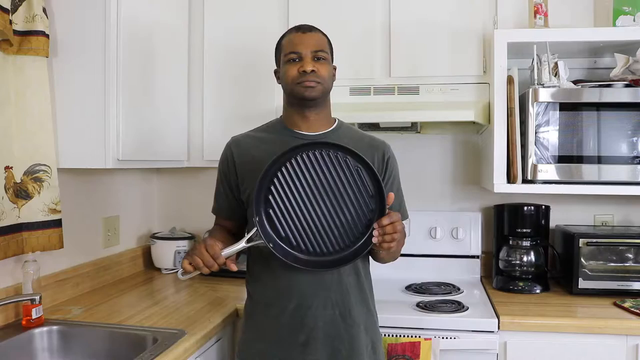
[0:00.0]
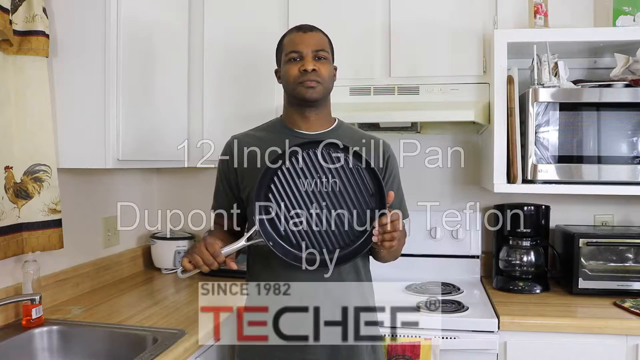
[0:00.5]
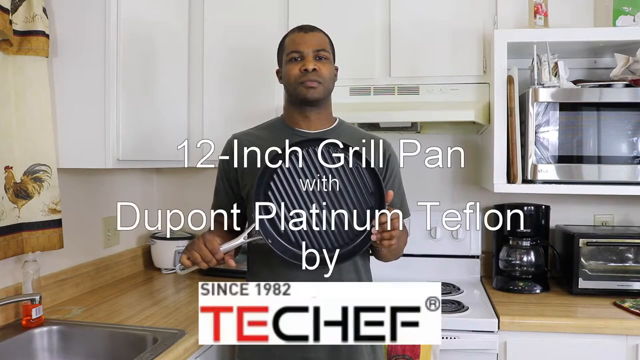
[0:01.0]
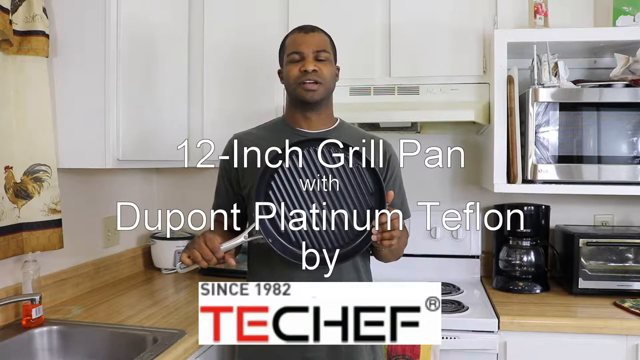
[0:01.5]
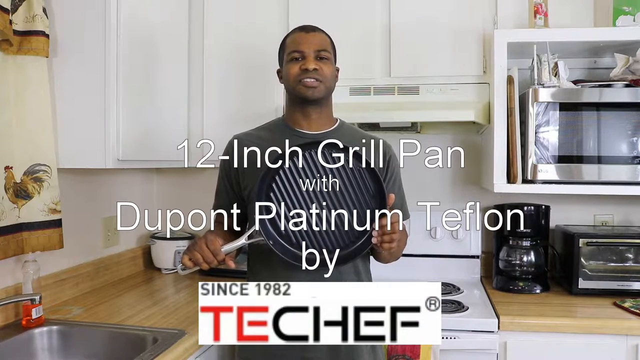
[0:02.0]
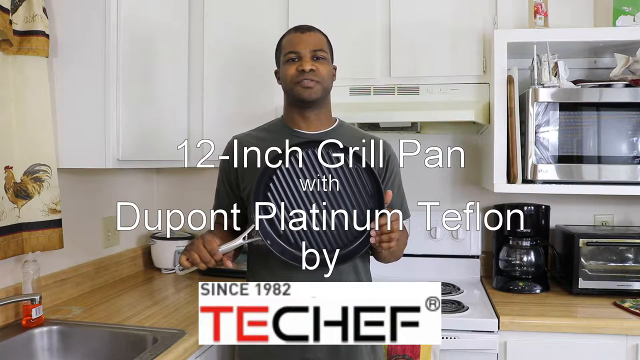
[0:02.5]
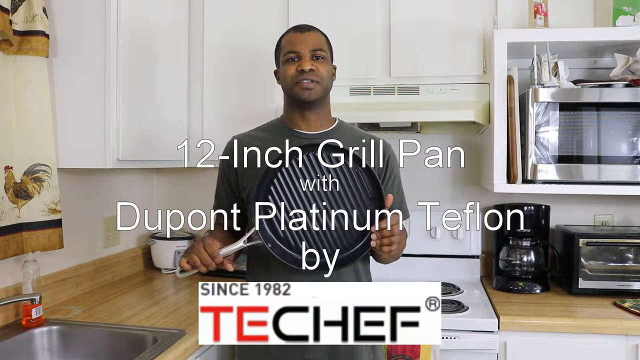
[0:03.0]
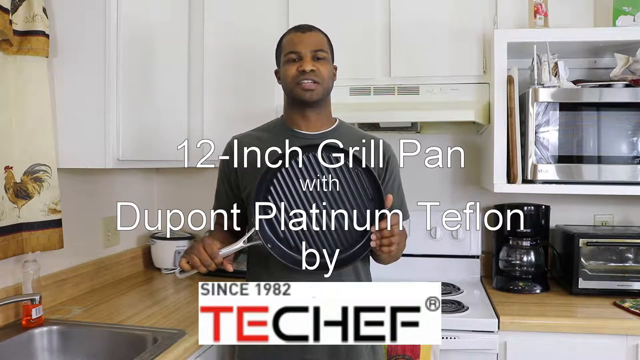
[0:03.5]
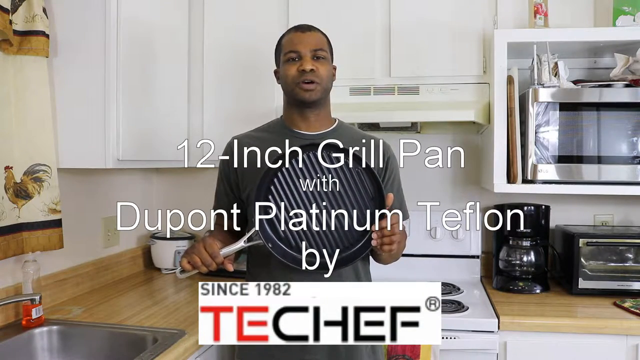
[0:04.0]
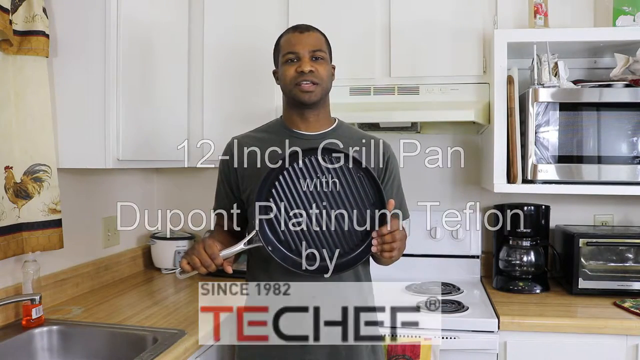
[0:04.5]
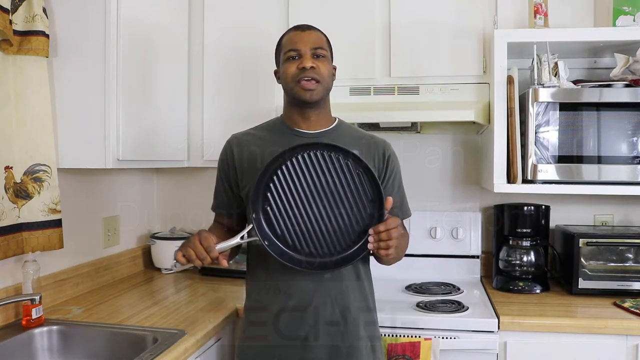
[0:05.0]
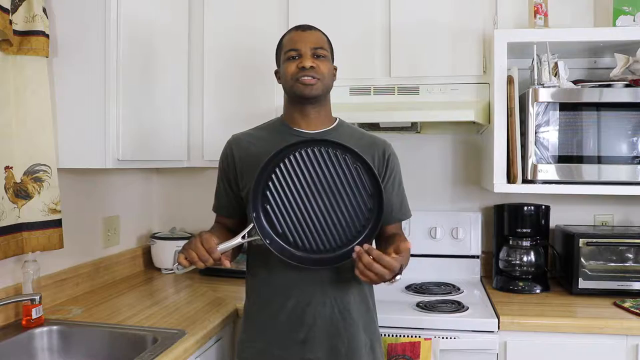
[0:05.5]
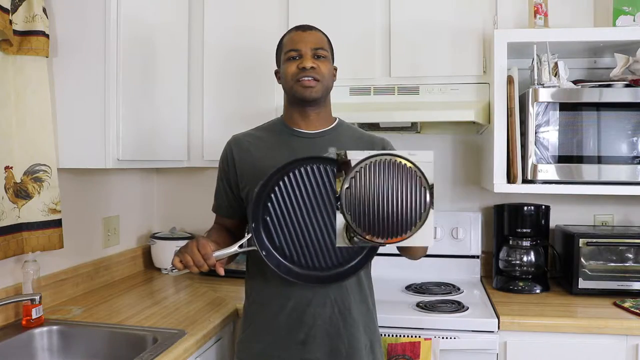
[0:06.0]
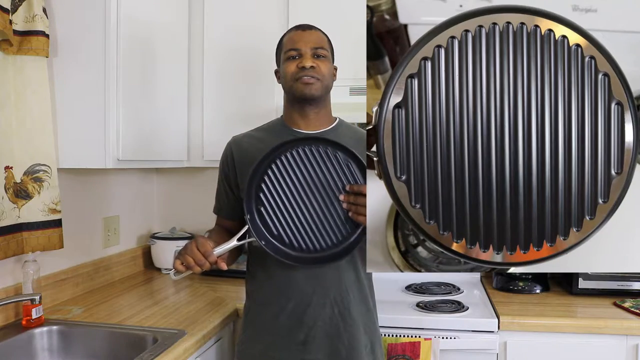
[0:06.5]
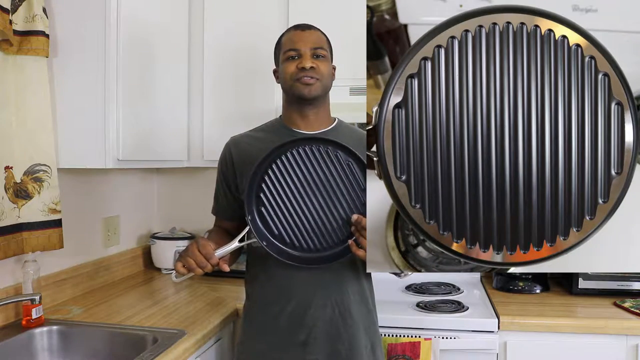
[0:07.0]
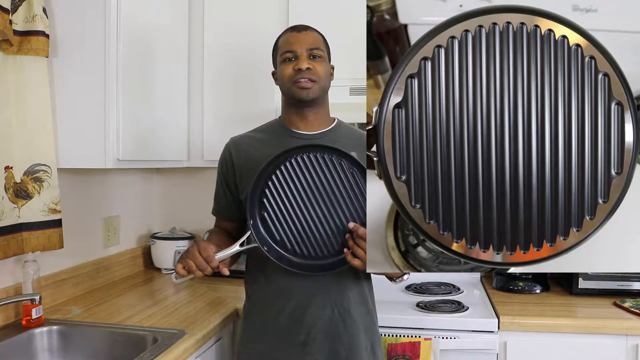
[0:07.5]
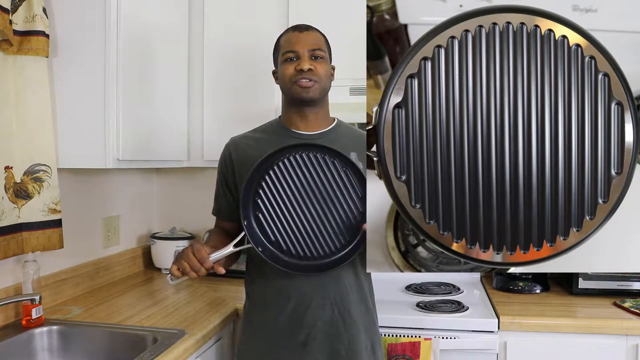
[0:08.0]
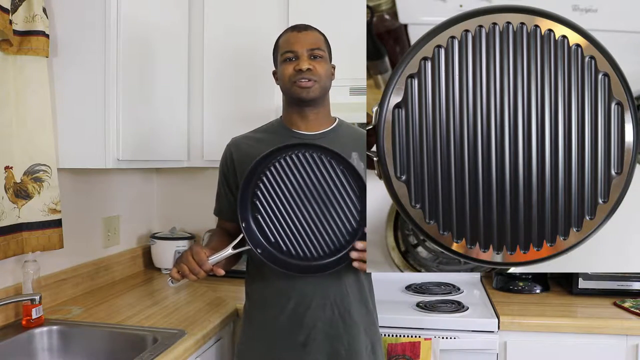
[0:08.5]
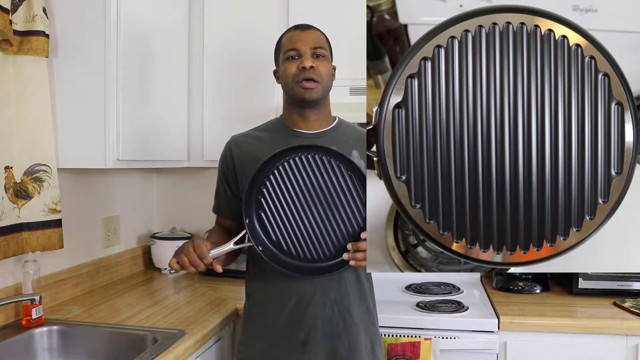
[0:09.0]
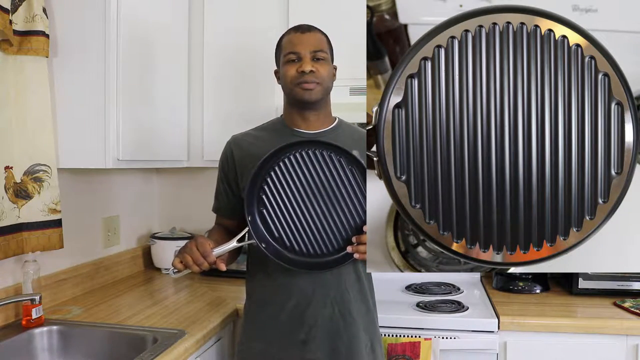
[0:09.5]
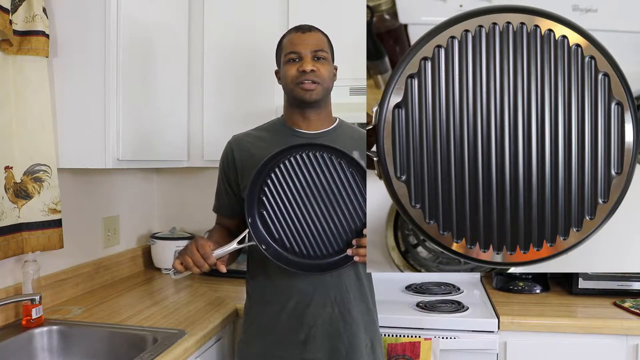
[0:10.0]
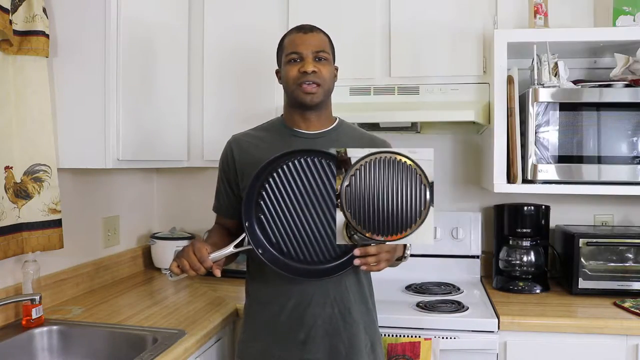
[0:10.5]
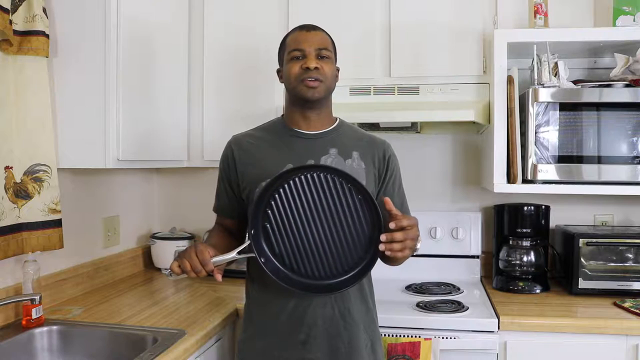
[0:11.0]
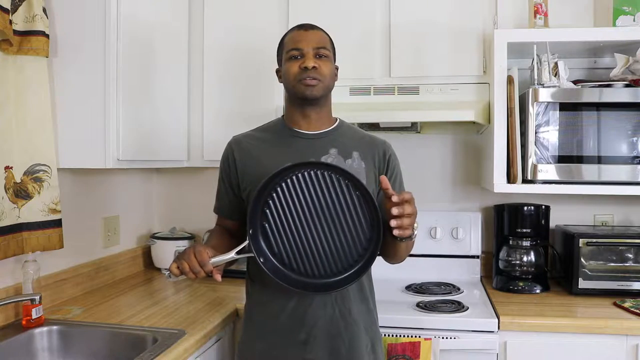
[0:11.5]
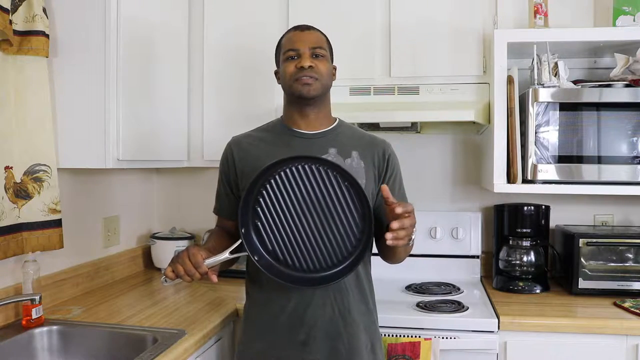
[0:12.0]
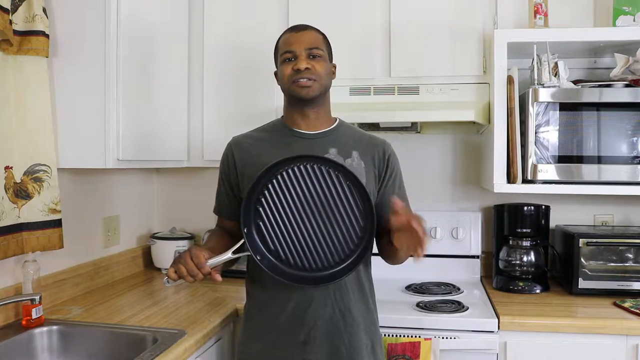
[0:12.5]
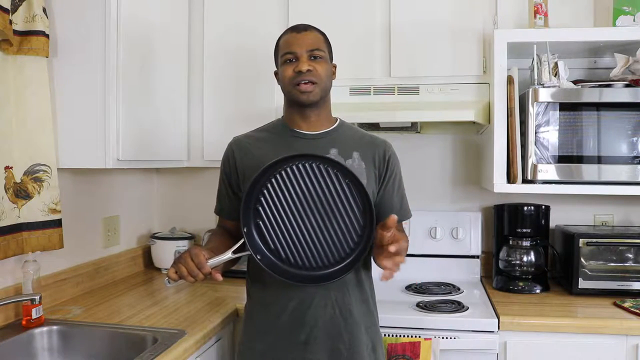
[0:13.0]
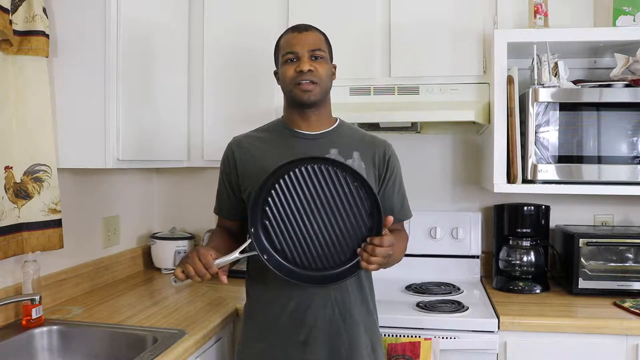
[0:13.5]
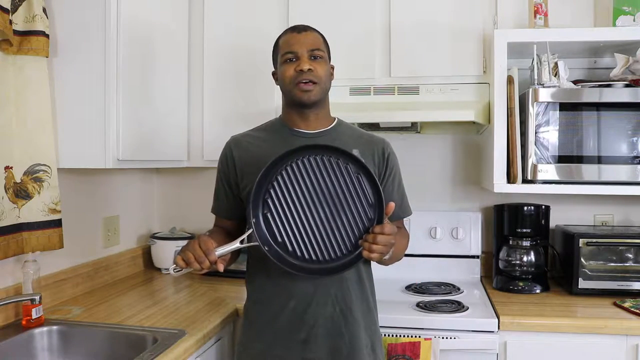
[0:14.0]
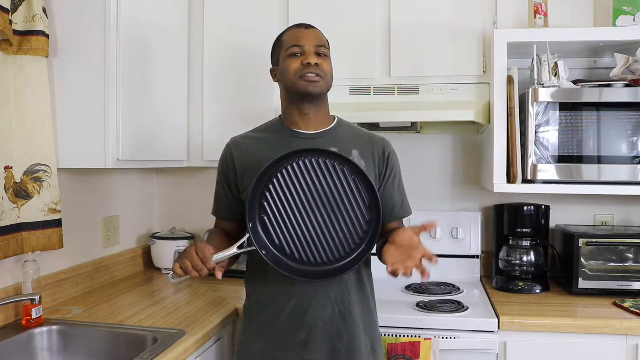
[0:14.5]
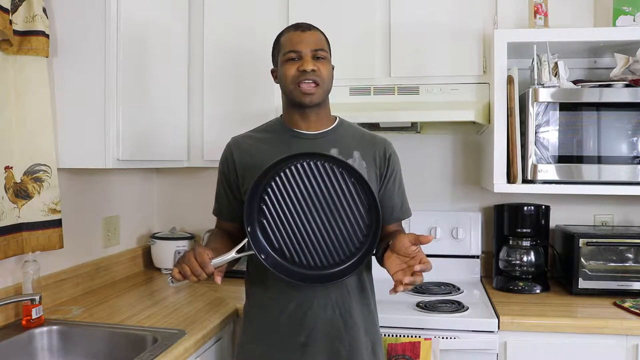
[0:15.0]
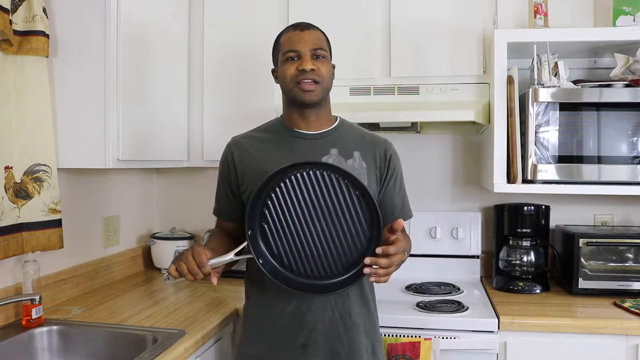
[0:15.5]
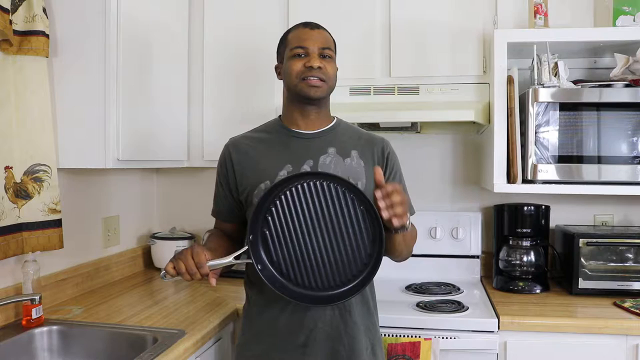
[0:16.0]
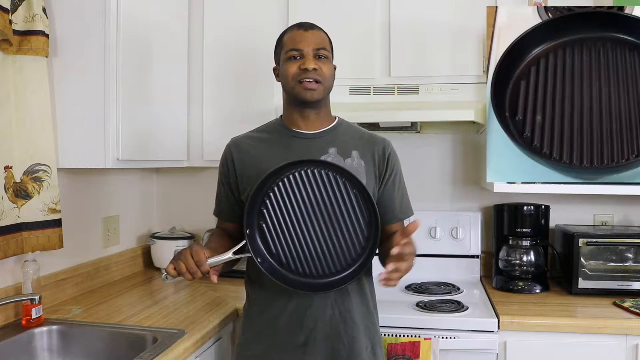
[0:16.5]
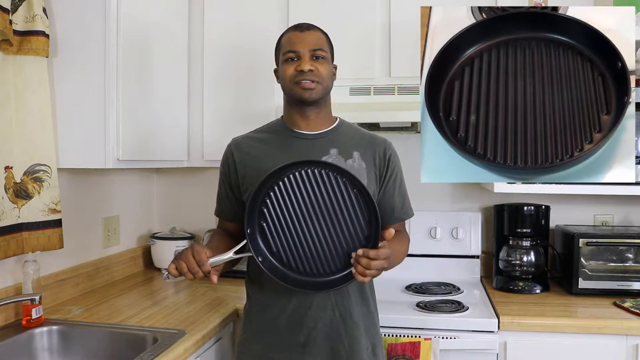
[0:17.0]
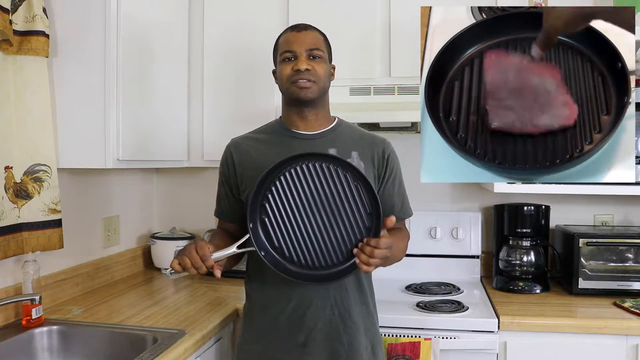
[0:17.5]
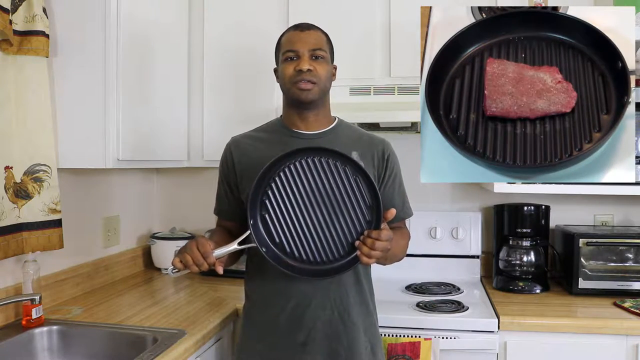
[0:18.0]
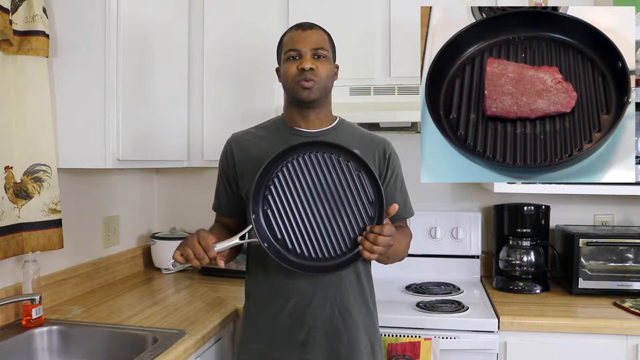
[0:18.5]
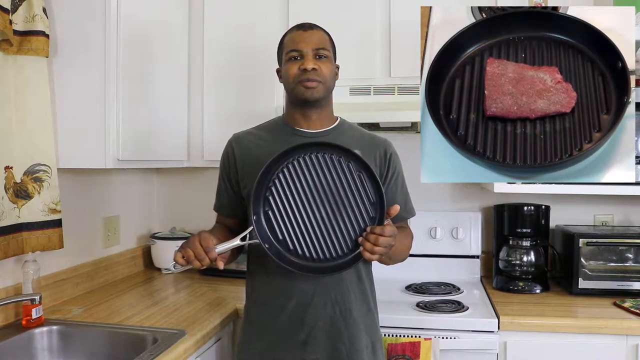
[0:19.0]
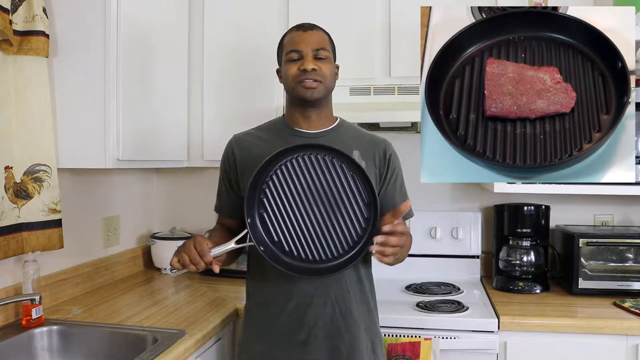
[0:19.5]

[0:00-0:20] A man stands in front of a kitchen. He appears to be African American and wears a gray shirt over a white undershirt. He holds a pan with both hands, gripping the handle with his right hand, and displays it for the camera. Behind him are a stove and a counter, with various shelves above the stove. On the right side of the shot is a microwave, and under the microwave a coffee maker and an electric stove are on top of the counter. Words overlaid on the screen read "12-inch grill pan with DuPont Platinum Teflon by Tech Chef." The man begins speaking to the camera. A close shot of the pan's details appears in the top right corner of the video, and another overlaid image shows a piece of meat in the pan.